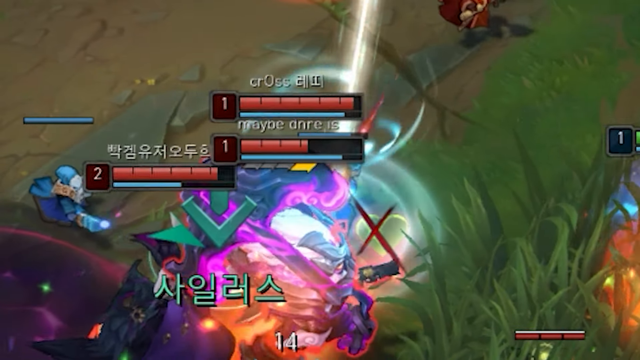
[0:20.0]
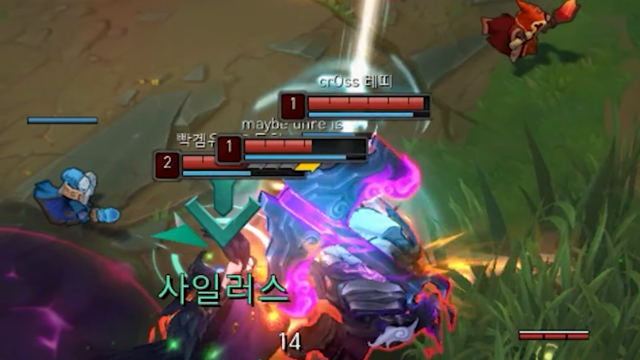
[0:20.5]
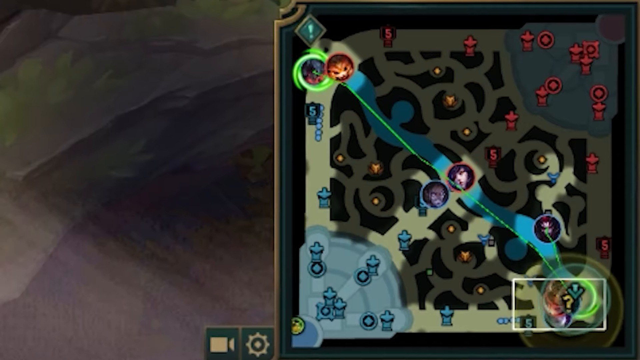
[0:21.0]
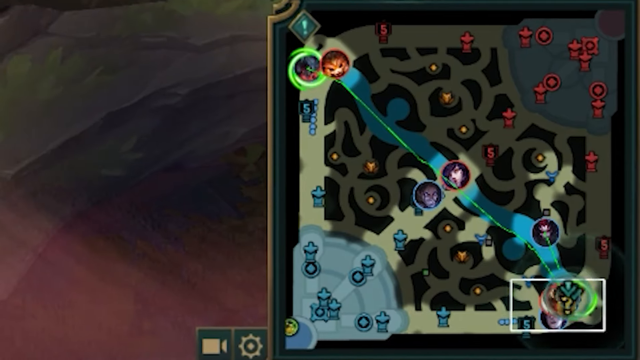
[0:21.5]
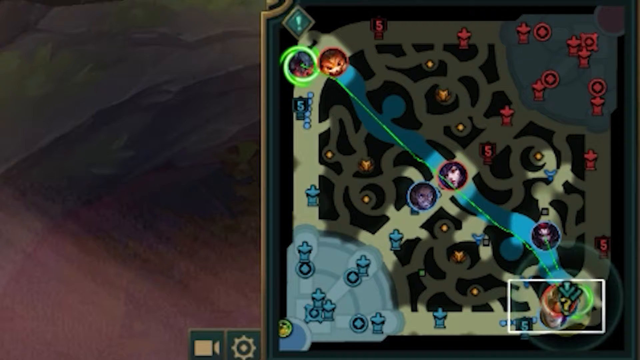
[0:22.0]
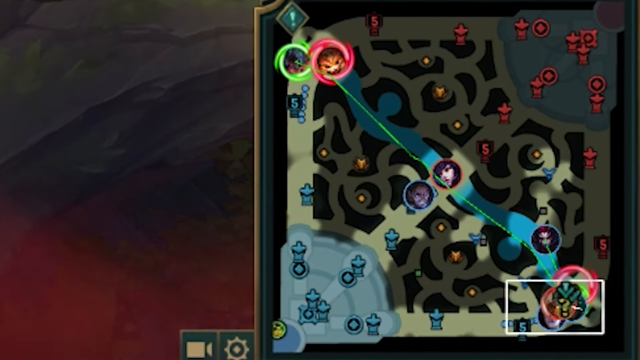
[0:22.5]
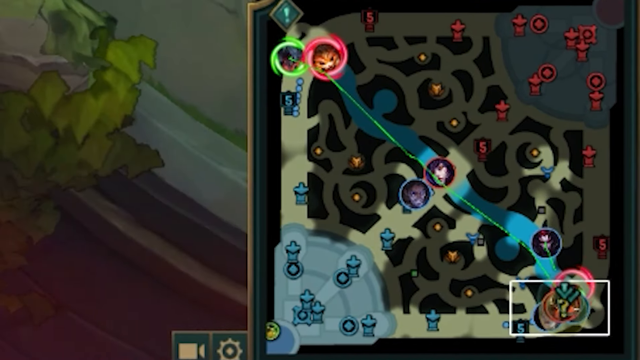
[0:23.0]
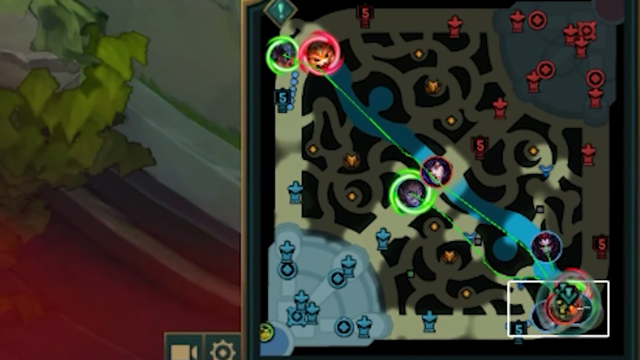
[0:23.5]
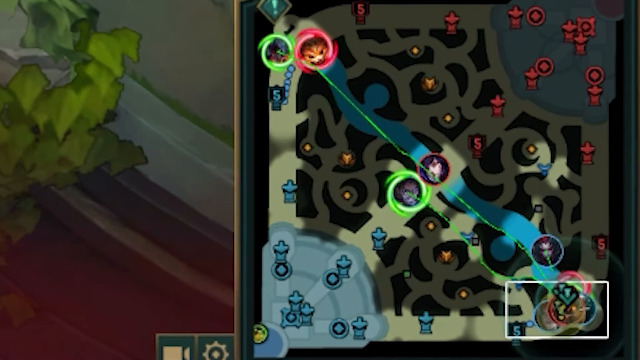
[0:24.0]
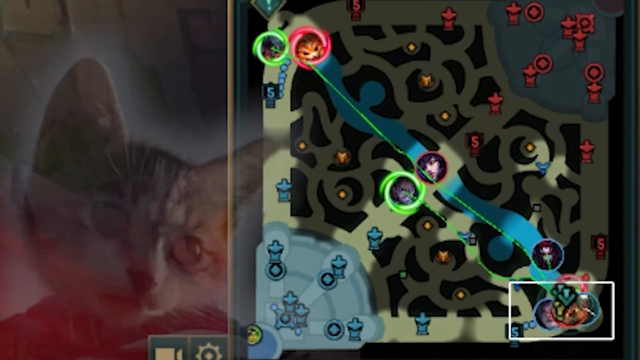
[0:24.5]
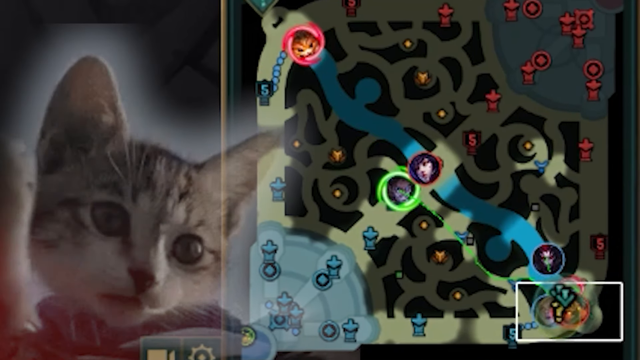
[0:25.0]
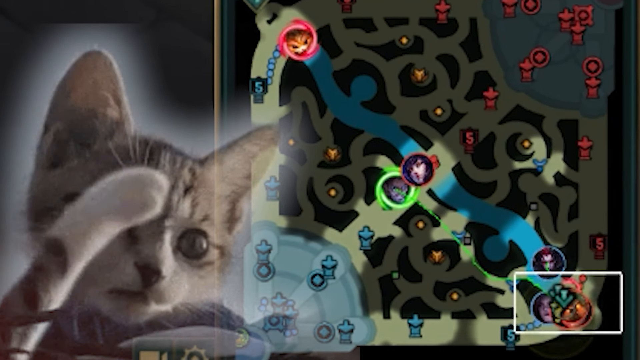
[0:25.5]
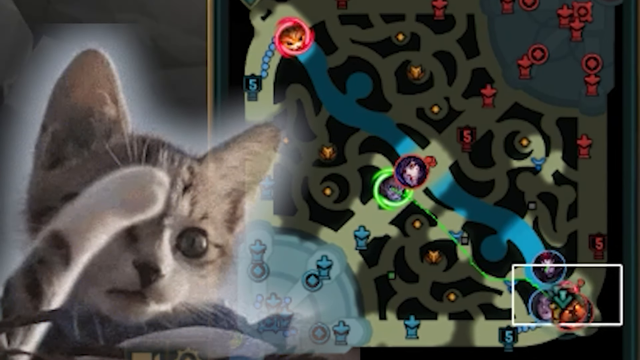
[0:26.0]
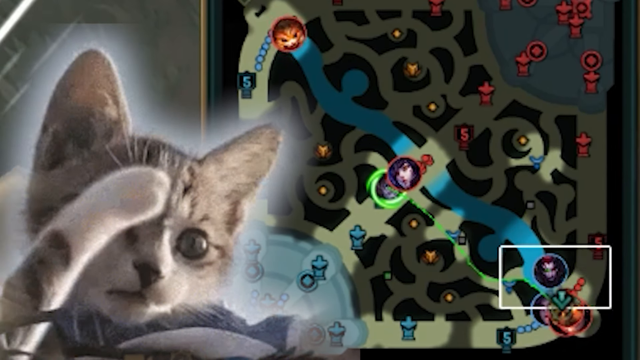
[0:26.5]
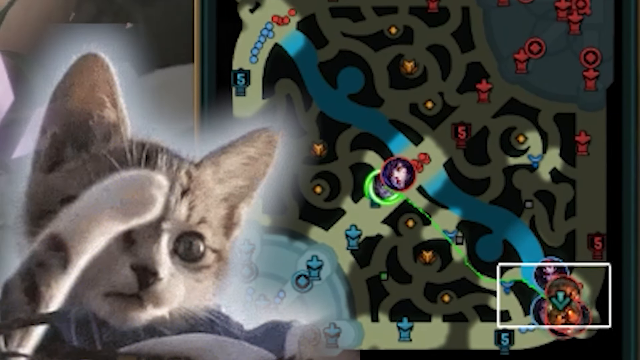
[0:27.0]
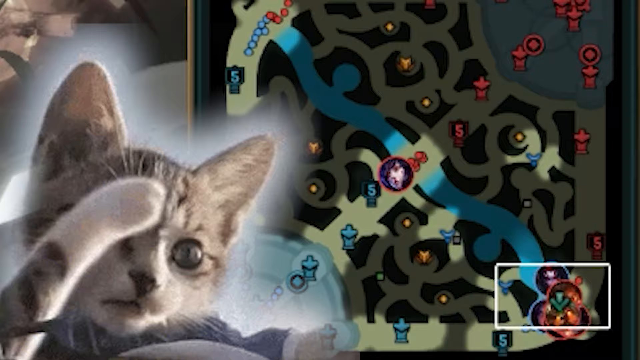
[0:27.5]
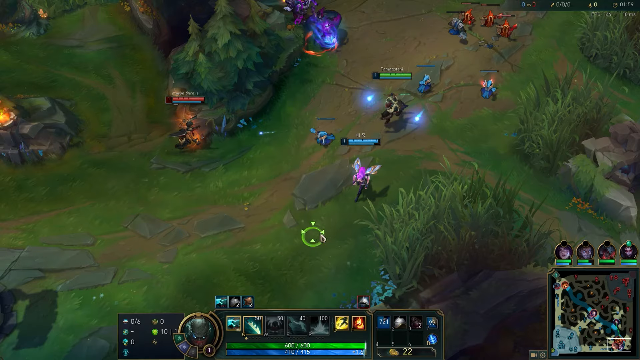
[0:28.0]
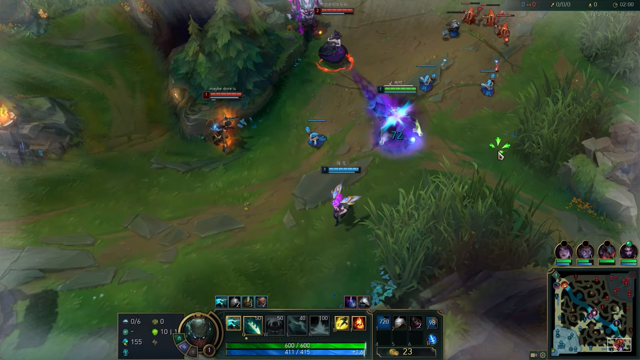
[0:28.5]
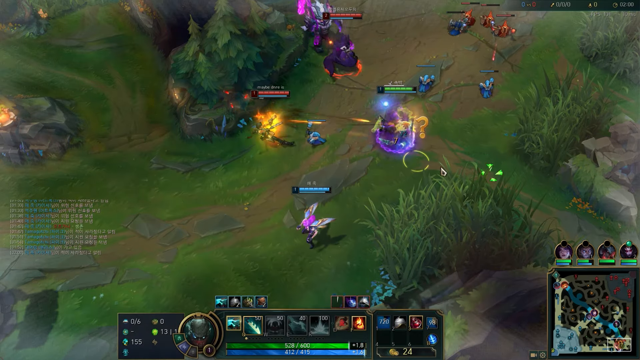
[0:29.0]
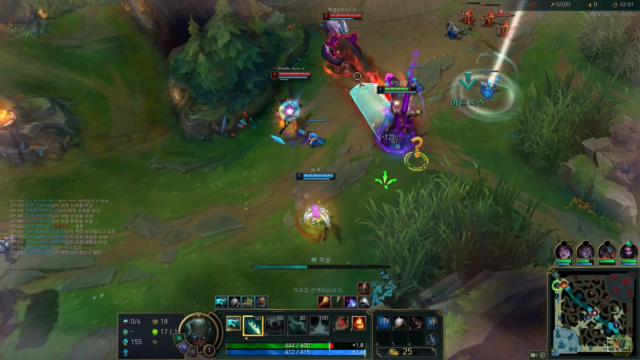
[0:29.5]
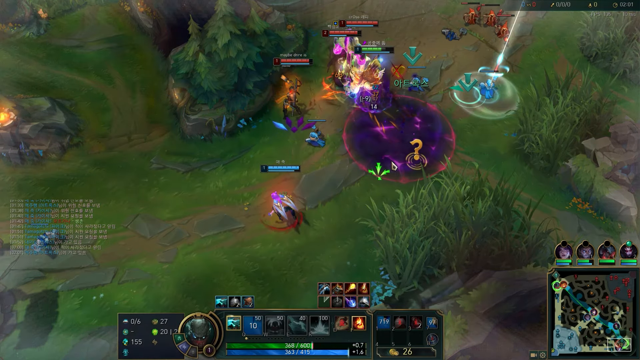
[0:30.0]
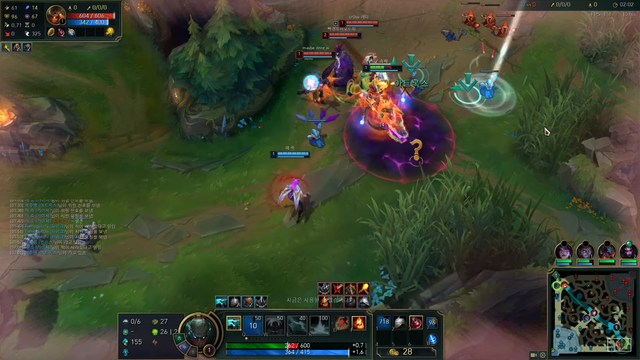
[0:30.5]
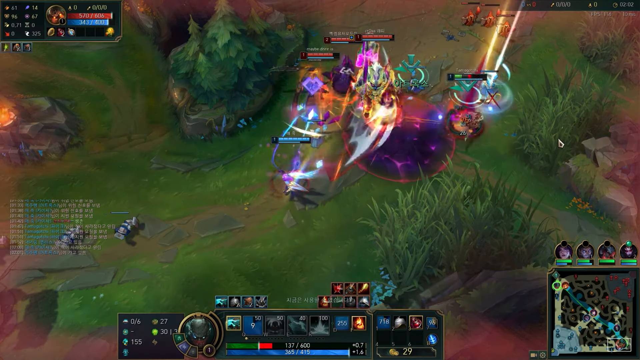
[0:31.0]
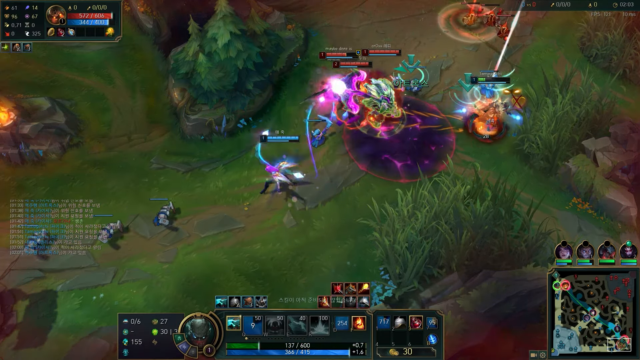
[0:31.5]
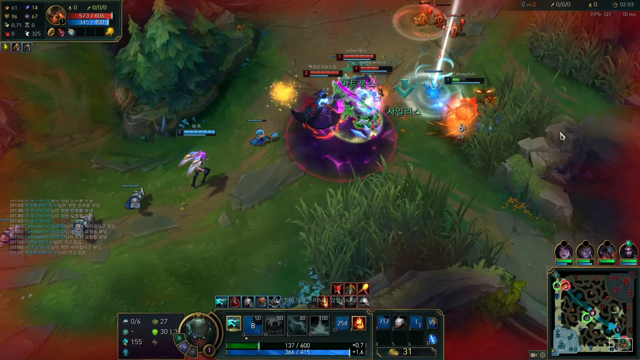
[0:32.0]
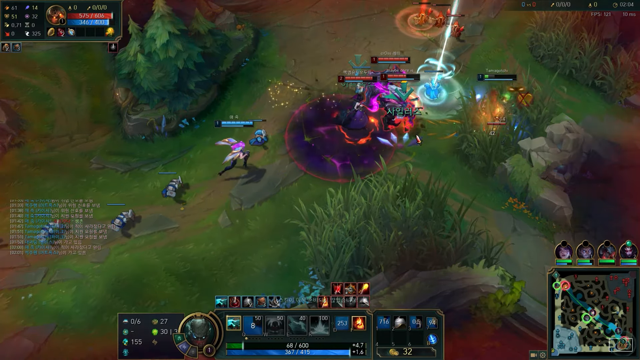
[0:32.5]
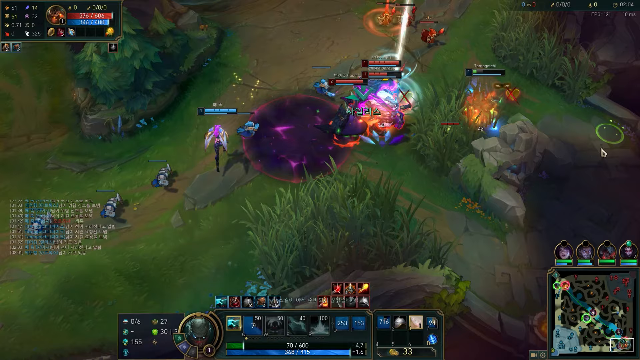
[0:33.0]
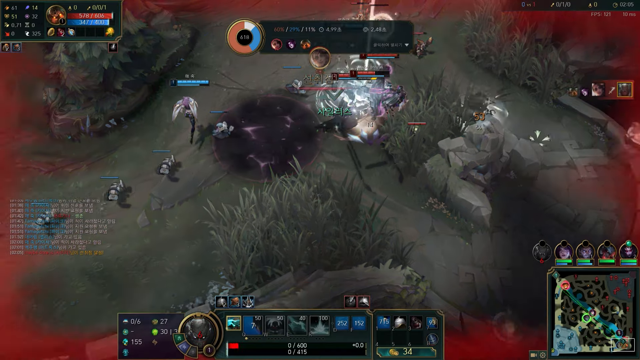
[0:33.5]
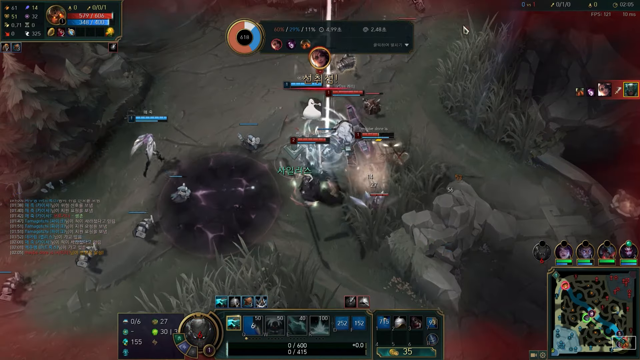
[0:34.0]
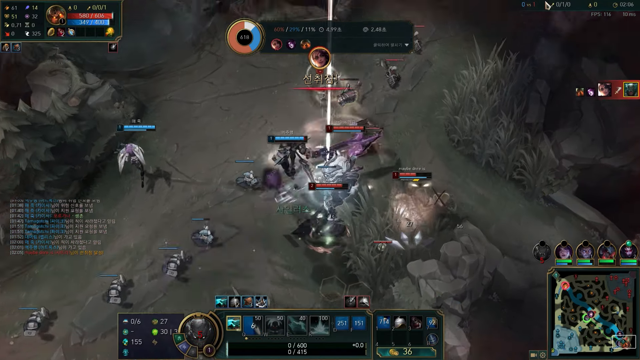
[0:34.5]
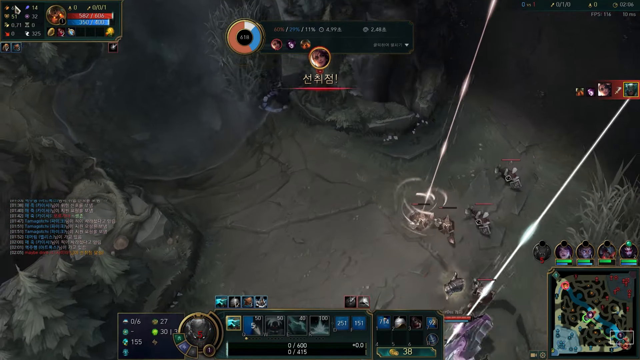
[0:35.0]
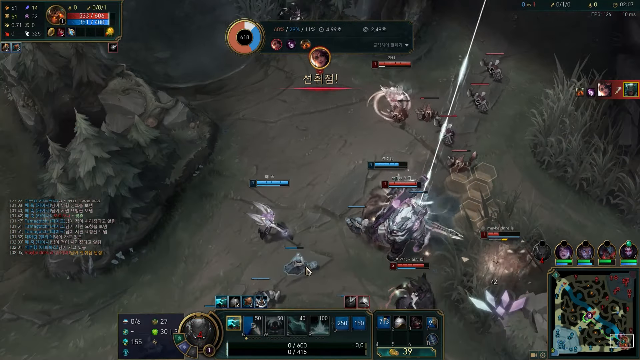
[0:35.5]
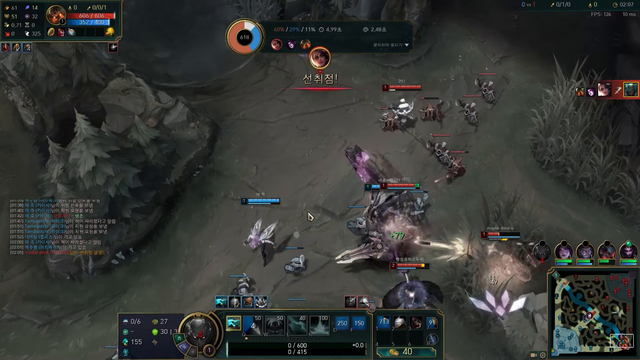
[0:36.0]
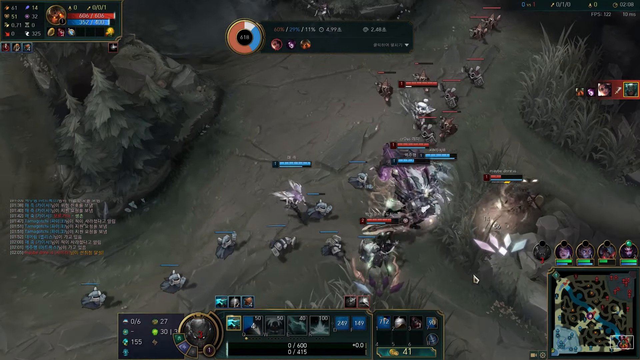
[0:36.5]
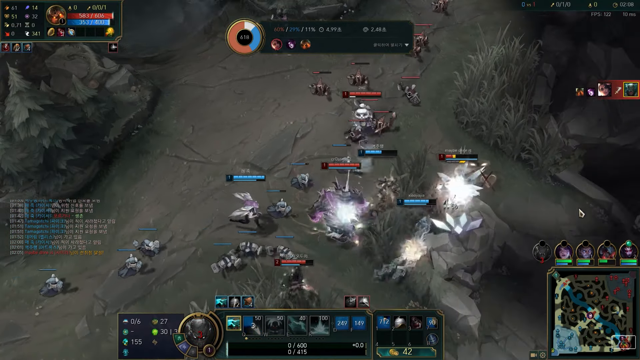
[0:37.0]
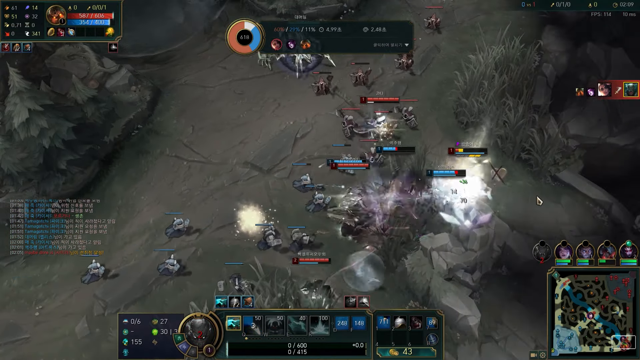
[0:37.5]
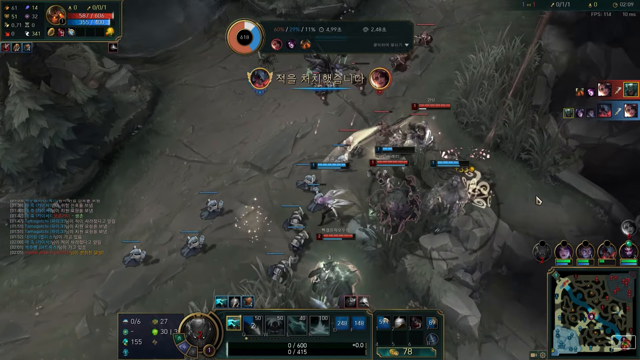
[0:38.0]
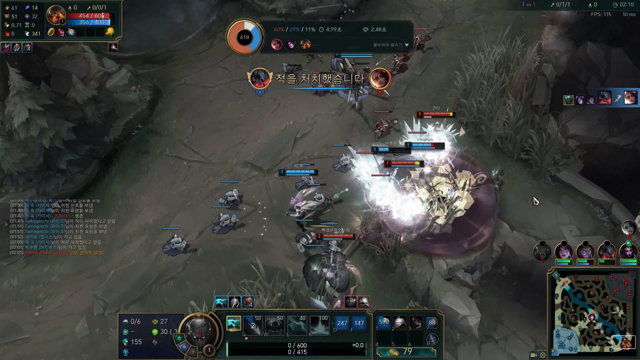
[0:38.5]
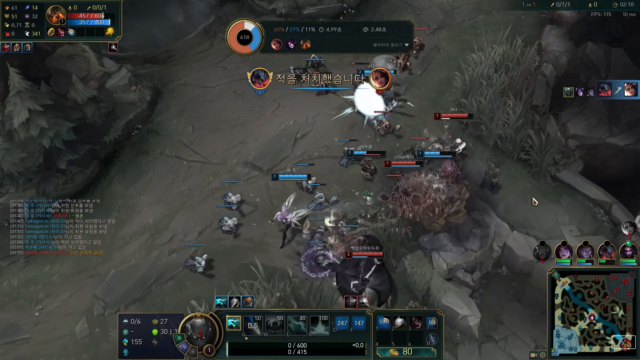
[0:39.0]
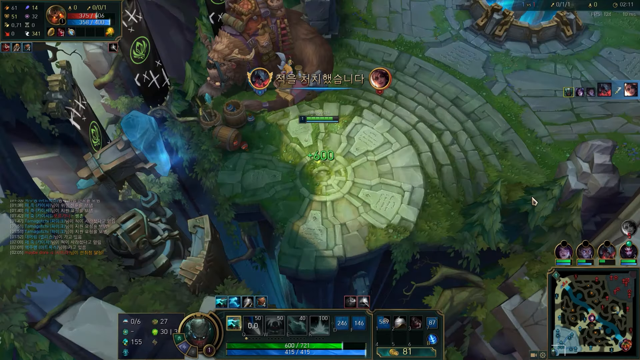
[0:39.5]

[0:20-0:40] The battle scene continues, and then a large picture of a cat appears in the left-hand corner. It is a real-life cat, not animated, and it kind of looks like it is giving a salute. The picture fades away. The view moves to a very large battle scene with lots of people fighting and lots going on, and then suddenly the screen kind of goes black and white, presumably because someone has engaged something that helps them win the battle. One of the parties appears to be winning.